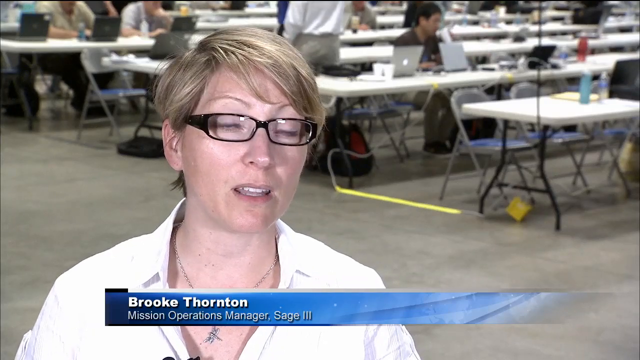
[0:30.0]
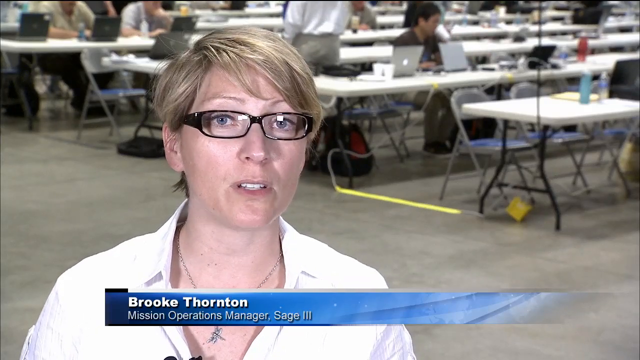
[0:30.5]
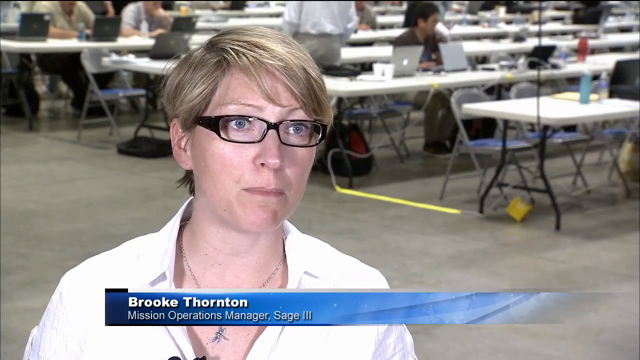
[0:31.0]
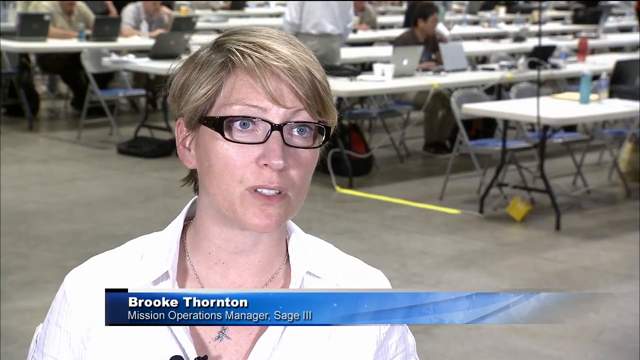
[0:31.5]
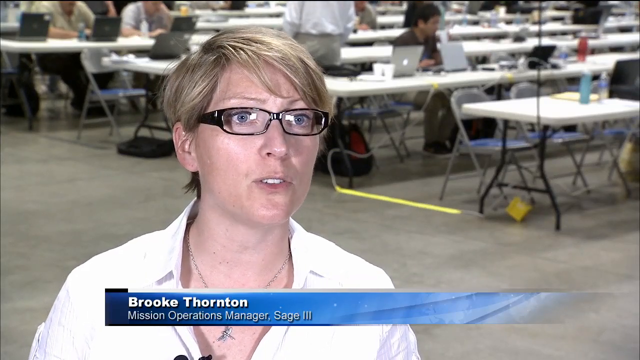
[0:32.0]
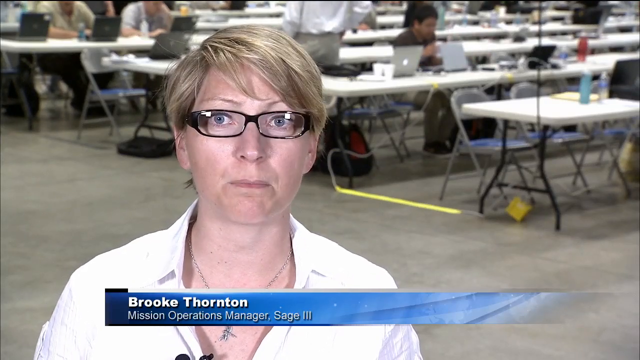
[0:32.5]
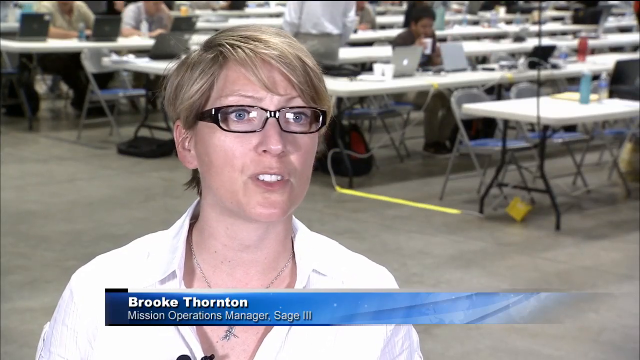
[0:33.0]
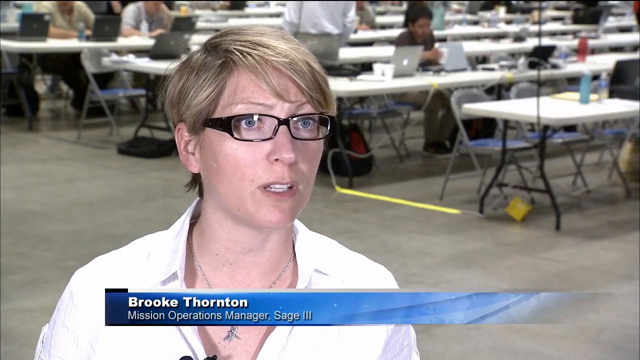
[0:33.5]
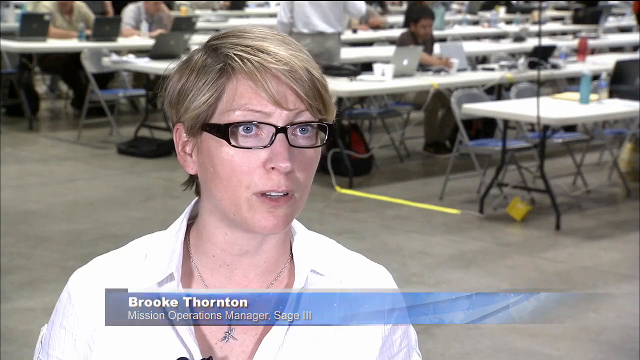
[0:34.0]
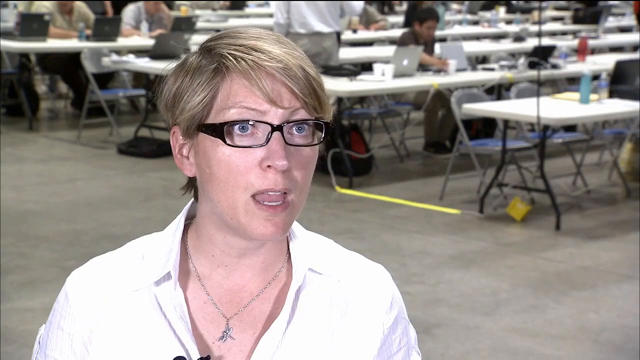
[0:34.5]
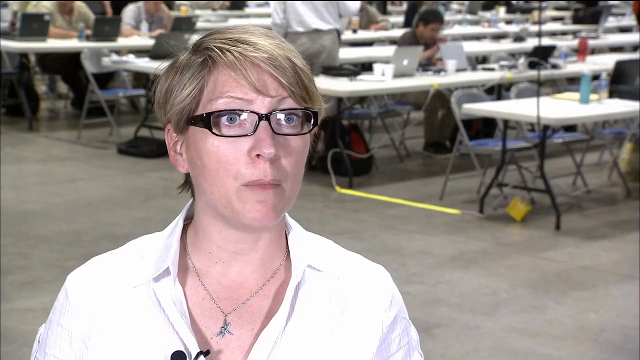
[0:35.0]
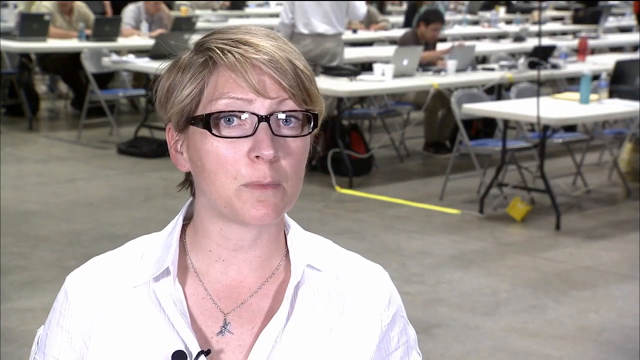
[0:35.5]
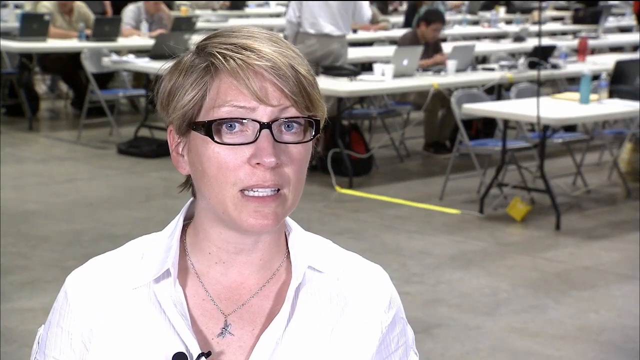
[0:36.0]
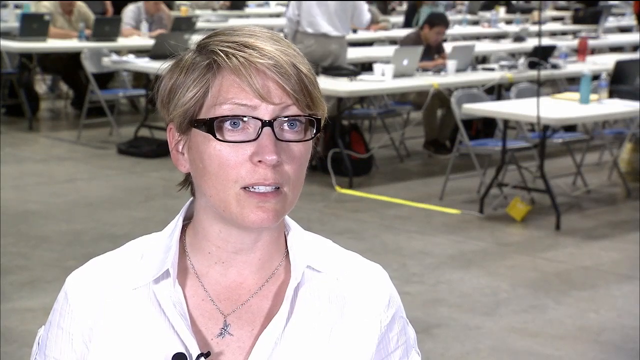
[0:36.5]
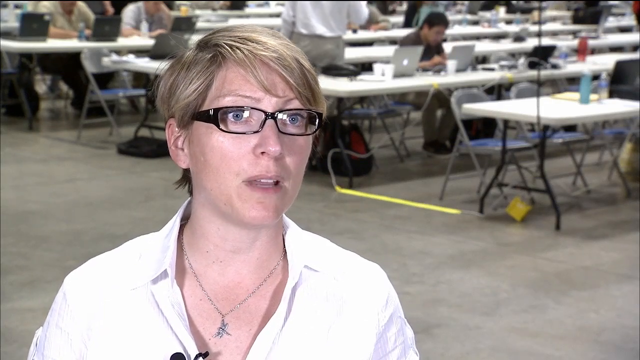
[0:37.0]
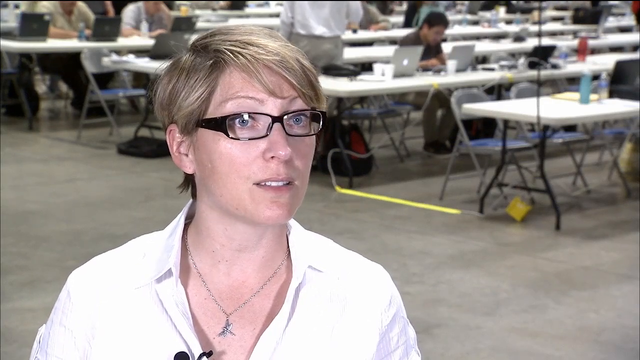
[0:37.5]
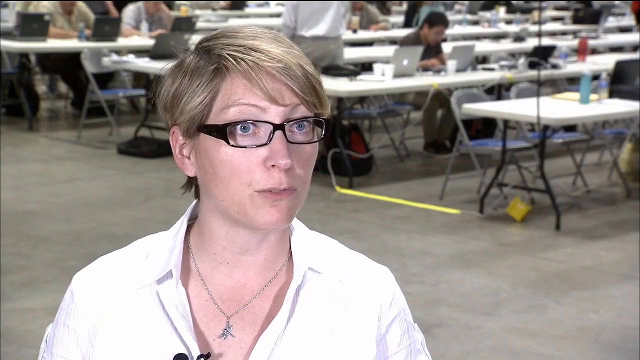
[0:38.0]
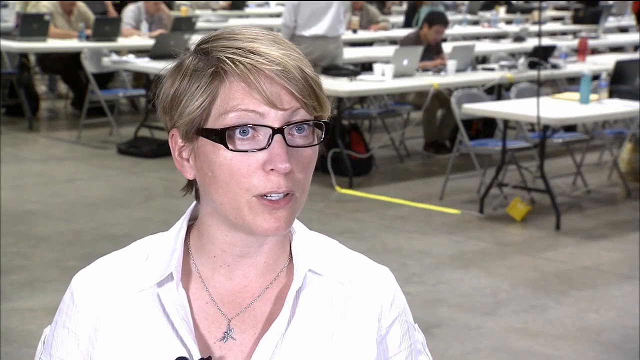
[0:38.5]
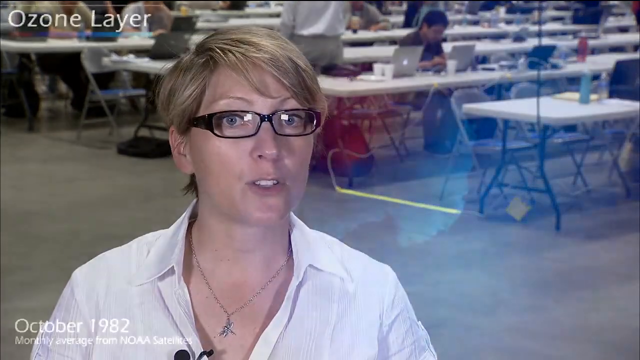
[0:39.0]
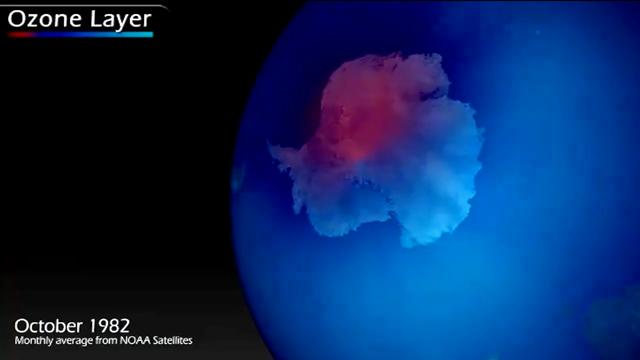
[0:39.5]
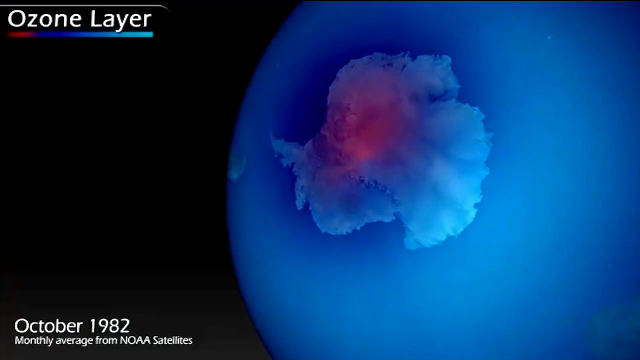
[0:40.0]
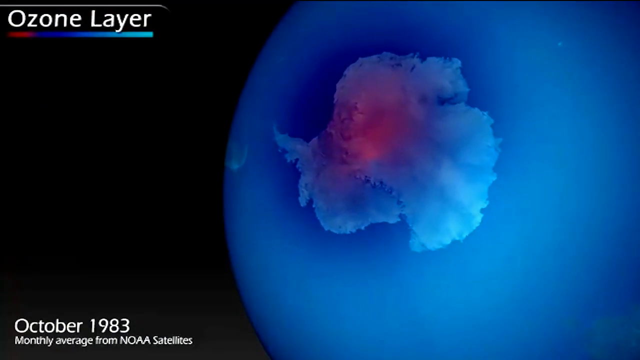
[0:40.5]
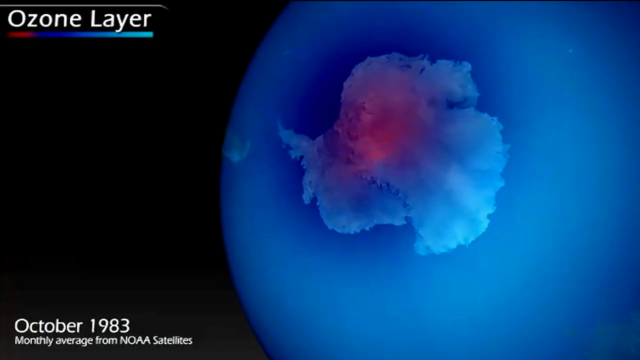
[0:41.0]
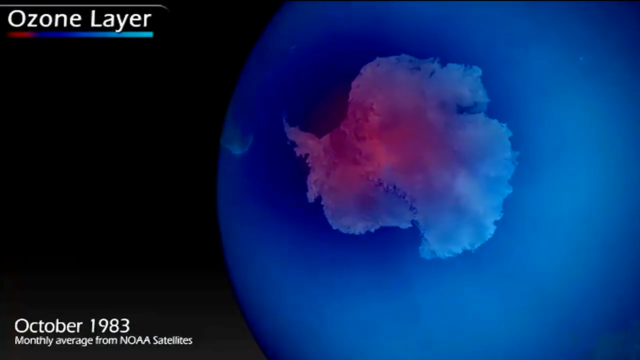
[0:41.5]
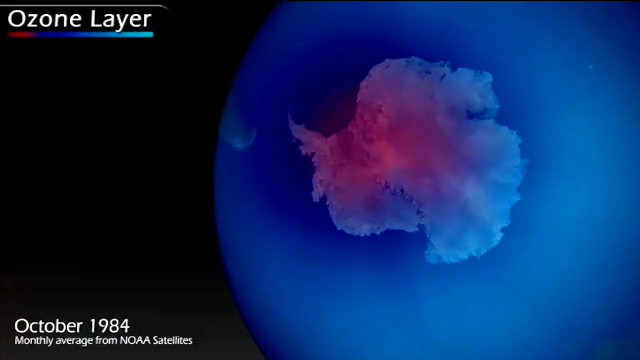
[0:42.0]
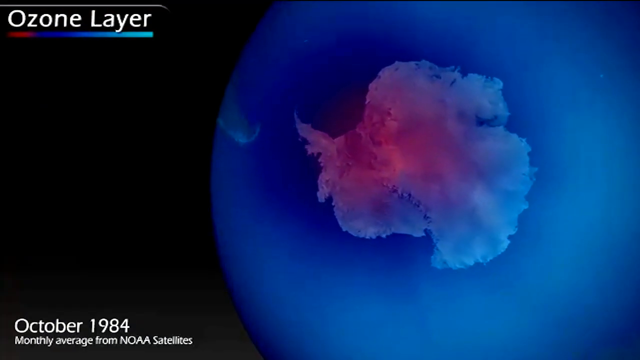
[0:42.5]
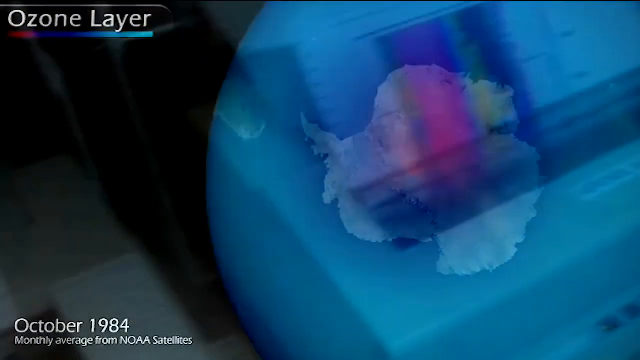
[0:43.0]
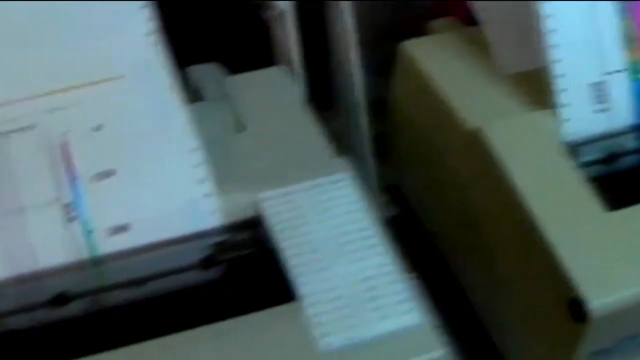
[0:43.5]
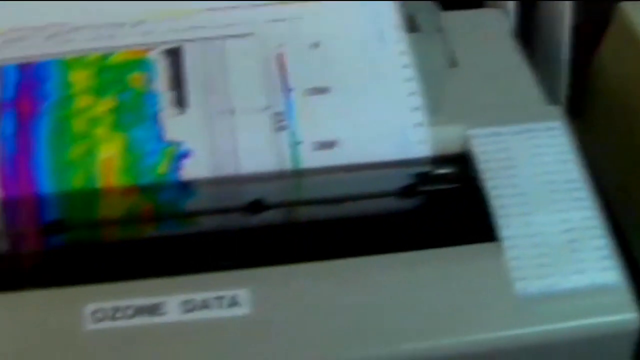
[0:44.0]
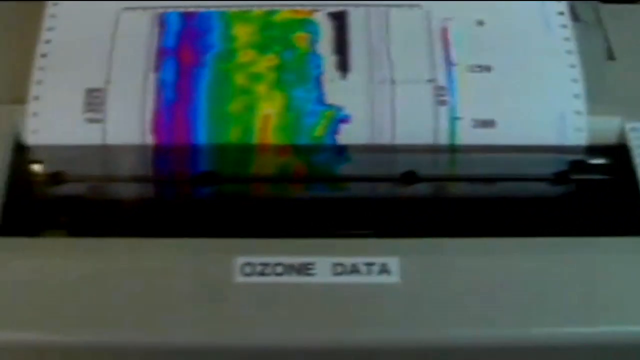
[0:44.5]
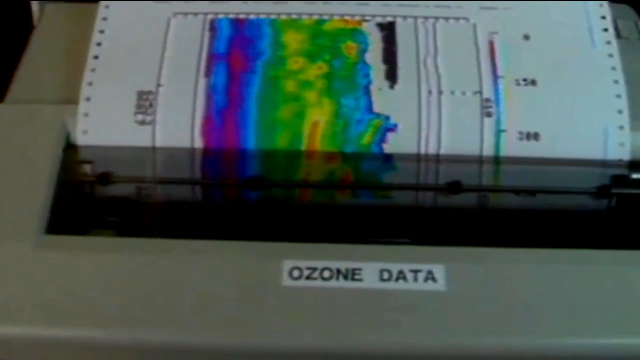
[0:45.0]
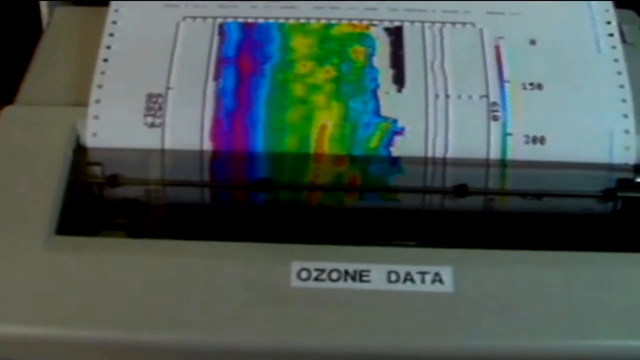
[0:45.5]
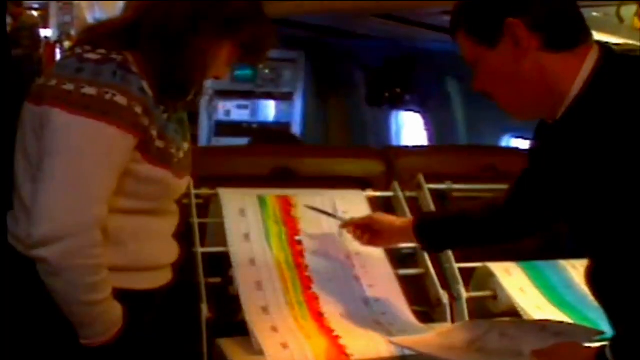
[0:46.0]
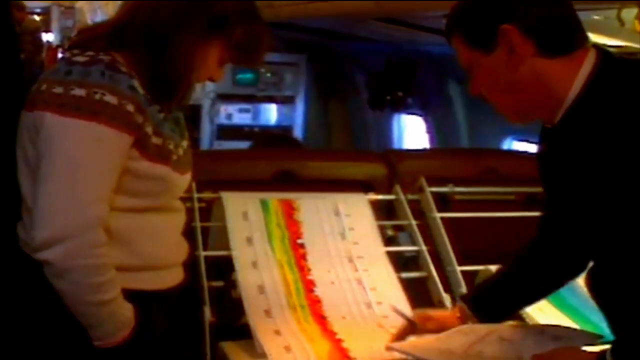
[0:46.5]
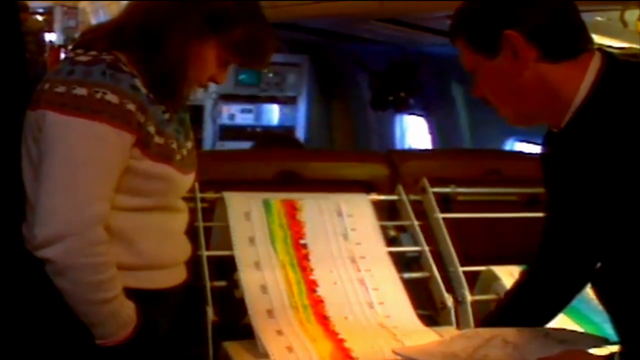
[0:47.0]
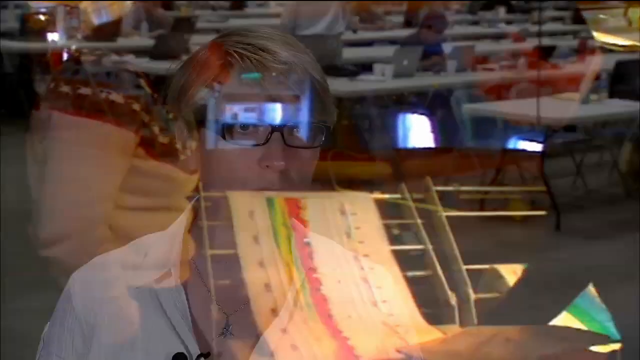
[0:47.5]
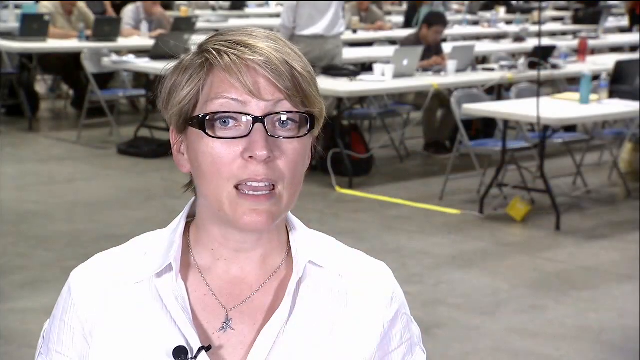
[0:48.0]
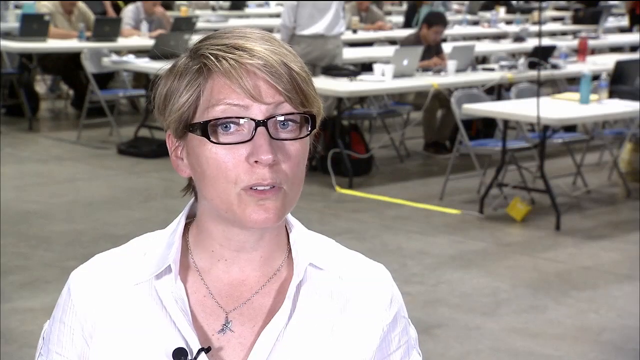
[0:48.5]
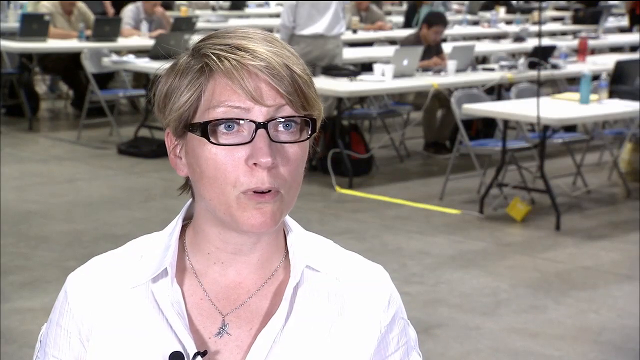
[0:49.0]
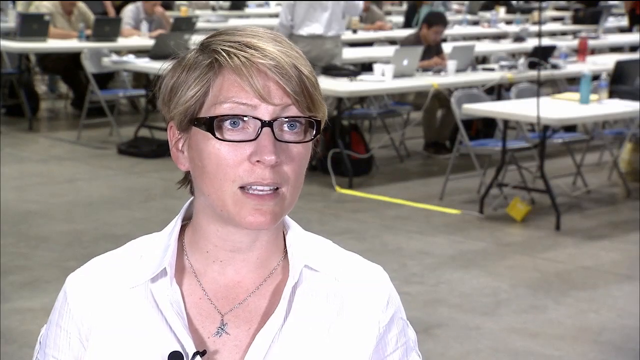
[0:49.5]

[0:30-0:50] A woman is shown from the shoulders up, speaking directly into the camera. She has short blonde hair and wears black-rimmed glasses, a white collared shirt unbuttoned at the top, and a necklace with a gold charm. Along the bottom of the screen, a blue stripe reads "Brooke Thornton" in white, and underneath, also in white, "Mission Operations Manager Sage 3." Behind her is a large room with many white tables and gray chairs around them. Open laptop computers are on some of the tables, and a few people are at a couple of the laptops. The room has a gray floor that looks like concrete. The scene then cuts to a dark blue screen with a blue circle representing the Earth, on which only one light blue land mass is visible. The top left corner reads "ozone layer" in white, and the bottom left corner reads "October 1983 monthly average from NOAA satellites."